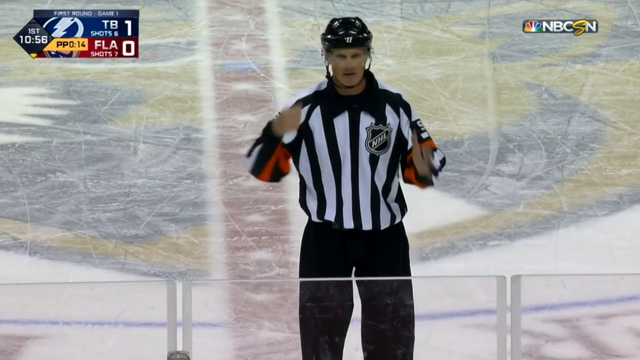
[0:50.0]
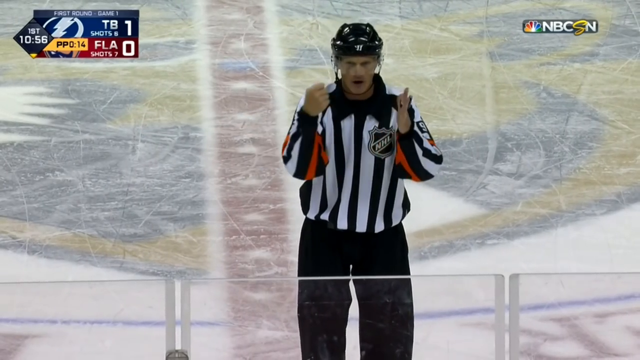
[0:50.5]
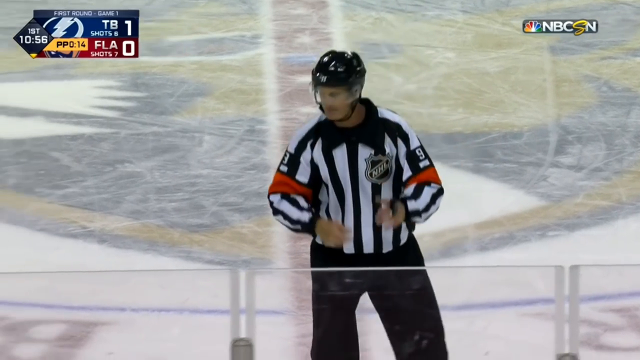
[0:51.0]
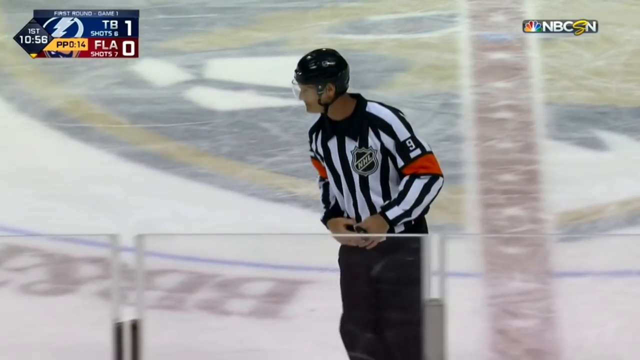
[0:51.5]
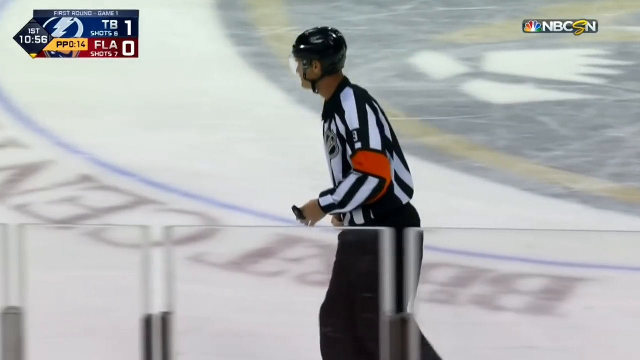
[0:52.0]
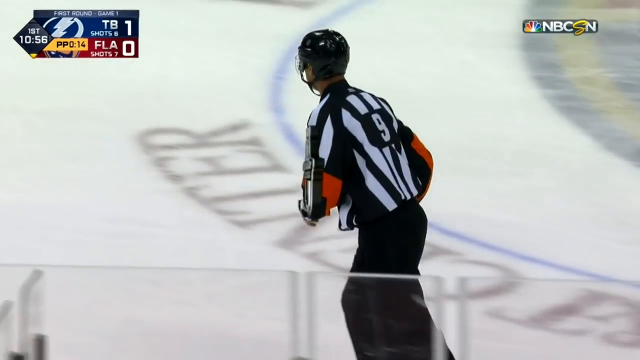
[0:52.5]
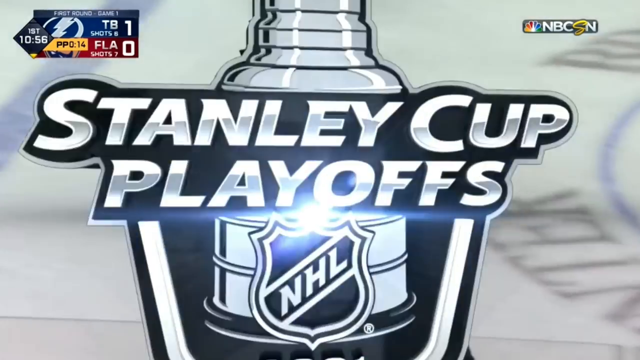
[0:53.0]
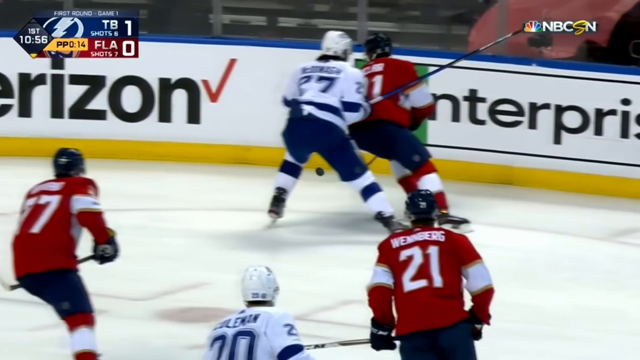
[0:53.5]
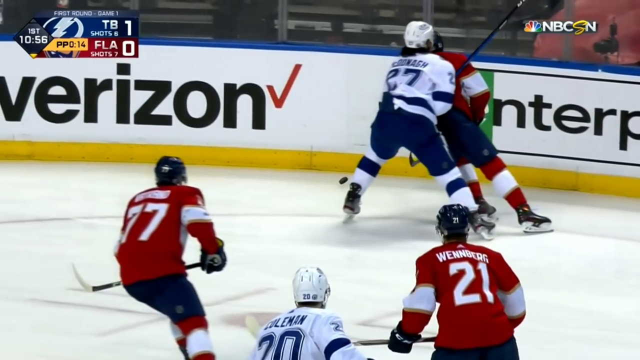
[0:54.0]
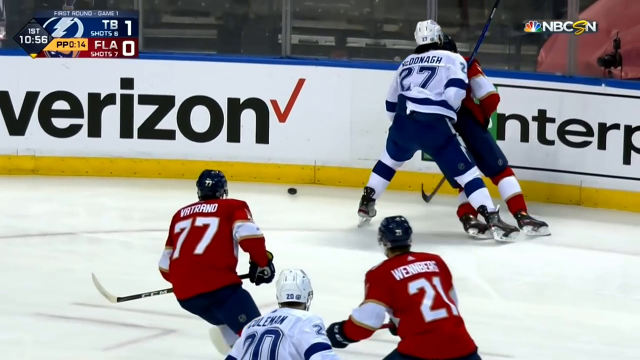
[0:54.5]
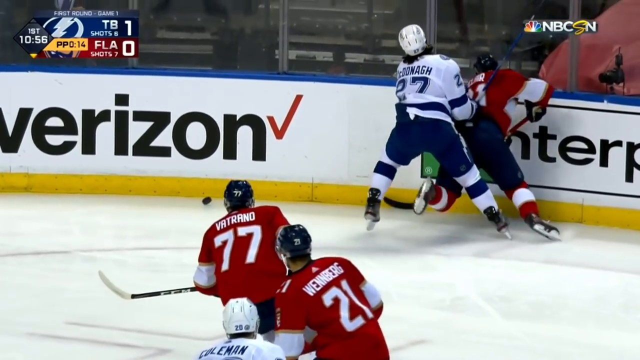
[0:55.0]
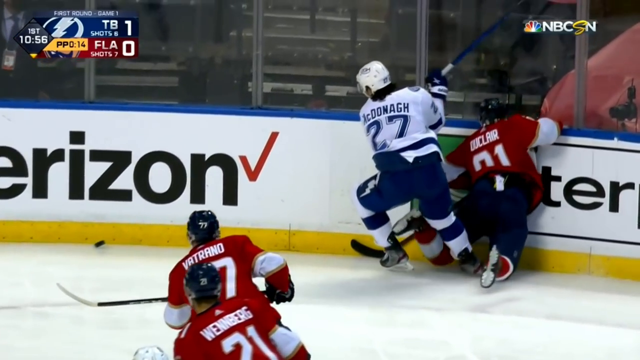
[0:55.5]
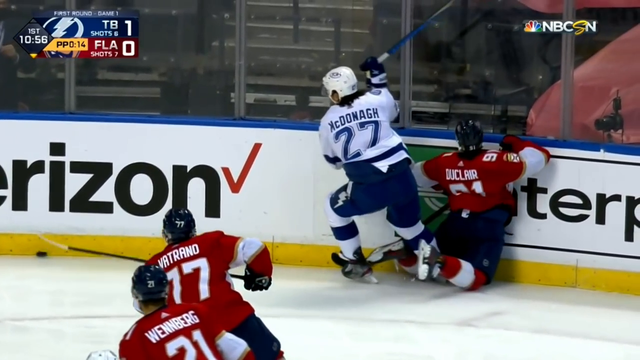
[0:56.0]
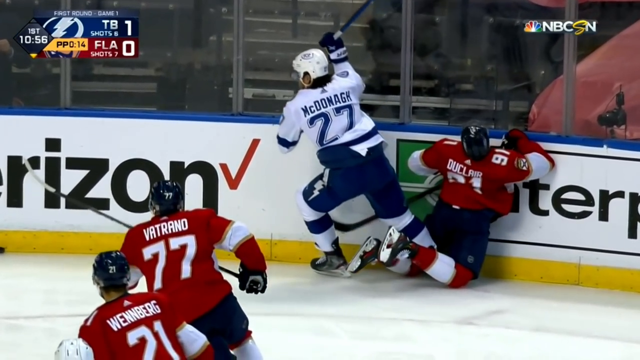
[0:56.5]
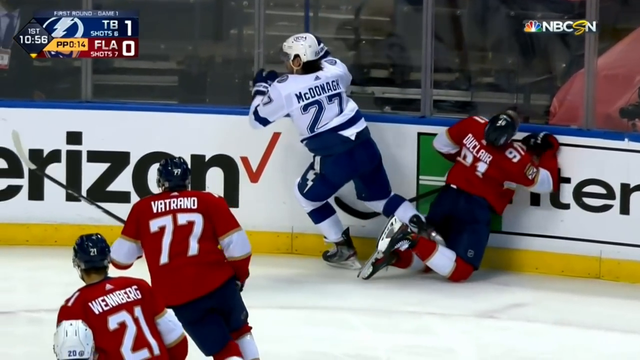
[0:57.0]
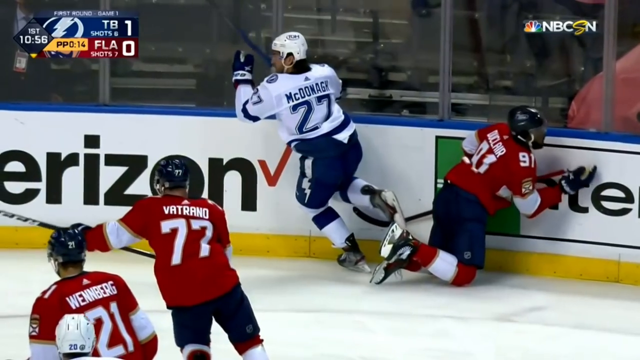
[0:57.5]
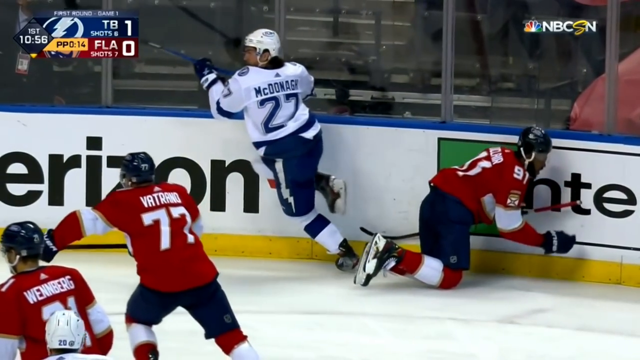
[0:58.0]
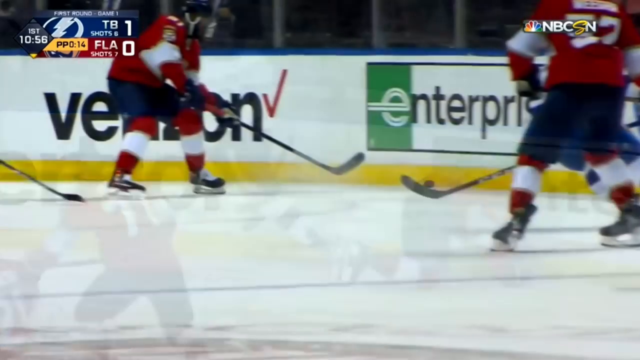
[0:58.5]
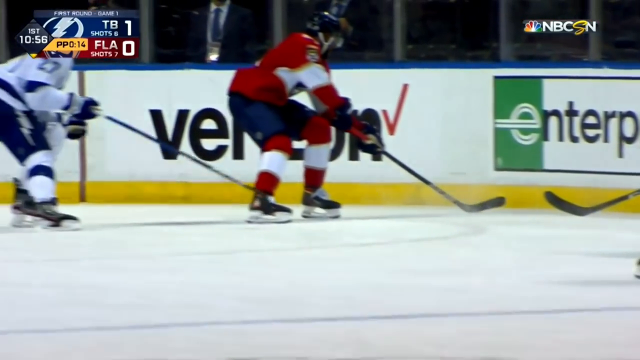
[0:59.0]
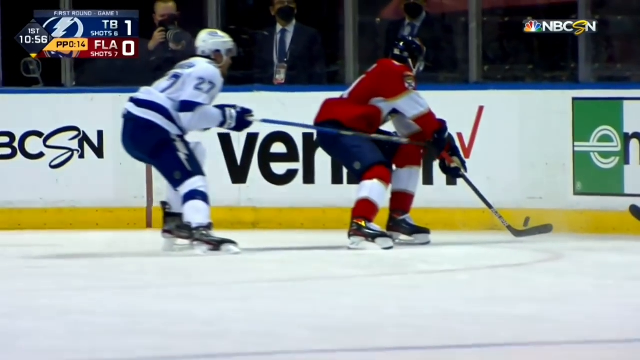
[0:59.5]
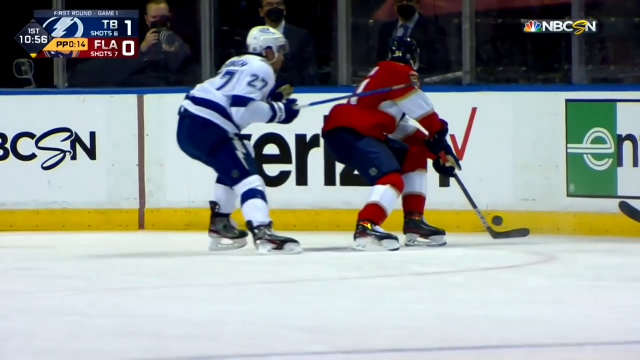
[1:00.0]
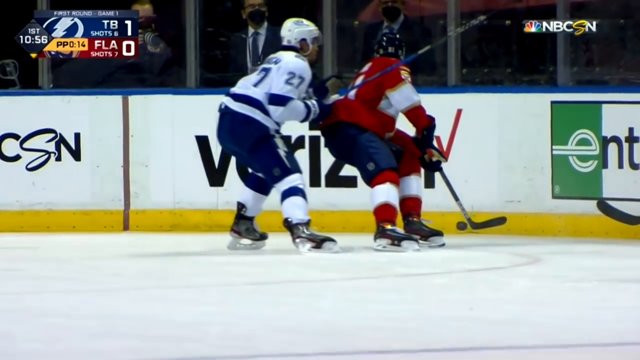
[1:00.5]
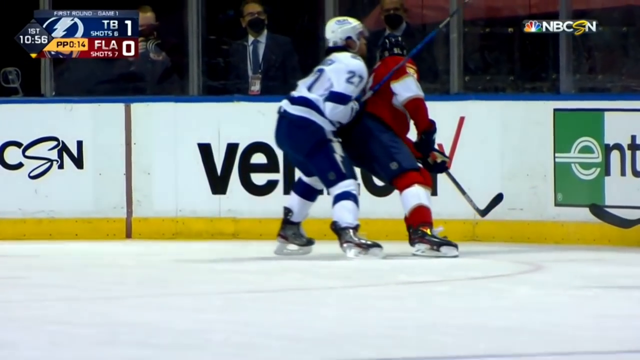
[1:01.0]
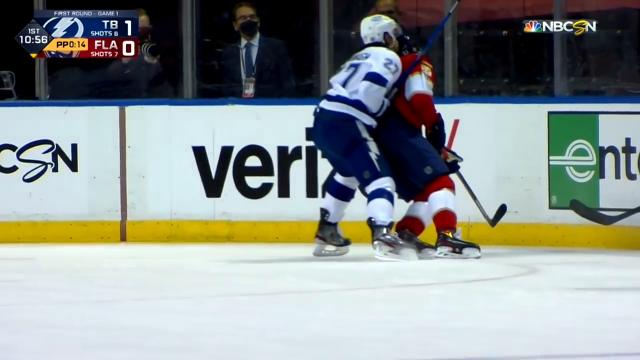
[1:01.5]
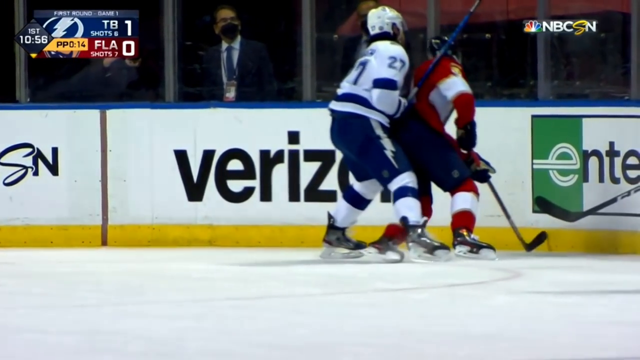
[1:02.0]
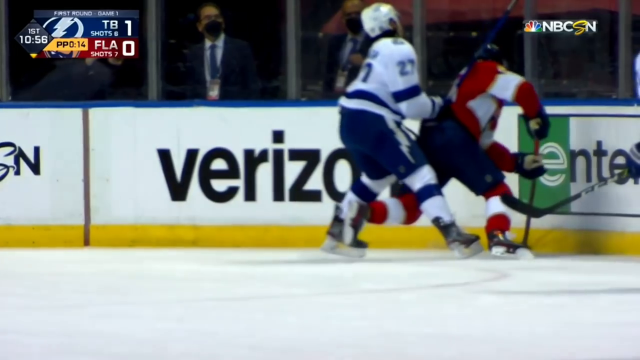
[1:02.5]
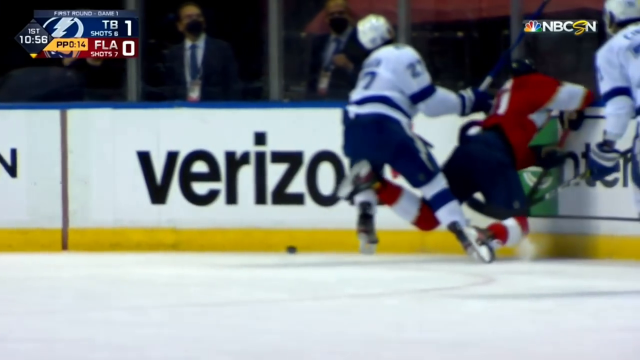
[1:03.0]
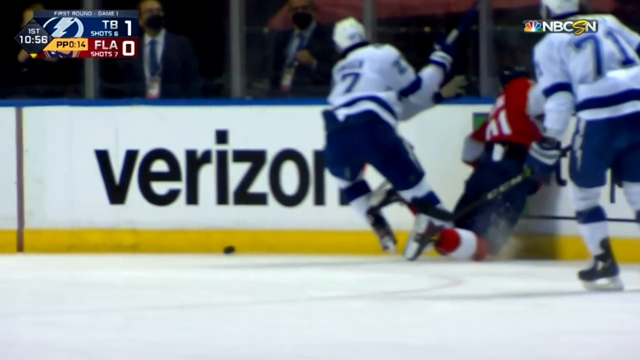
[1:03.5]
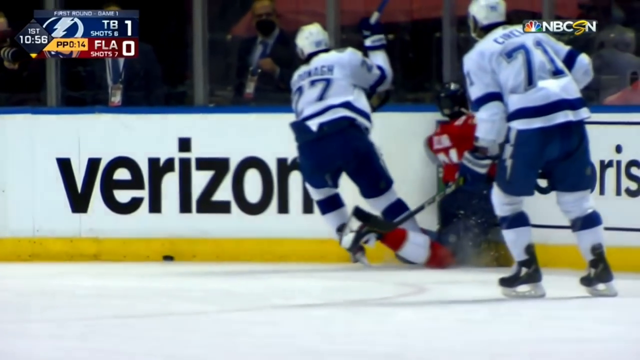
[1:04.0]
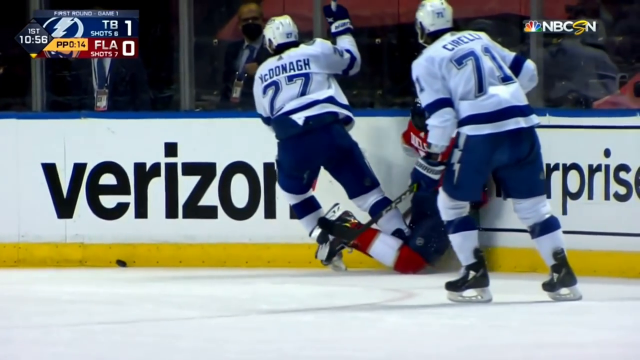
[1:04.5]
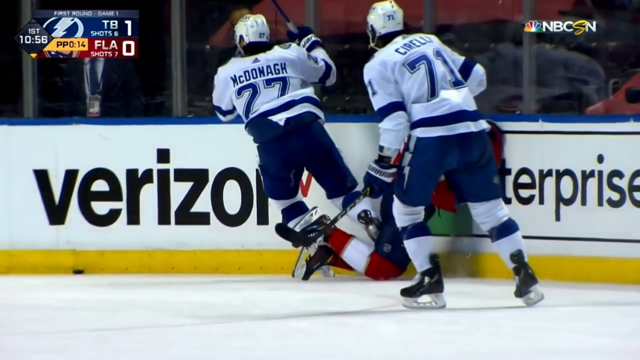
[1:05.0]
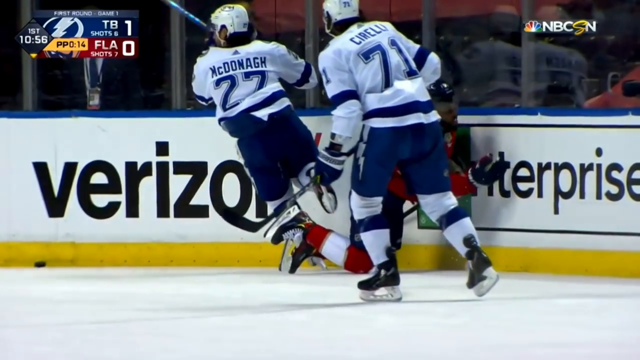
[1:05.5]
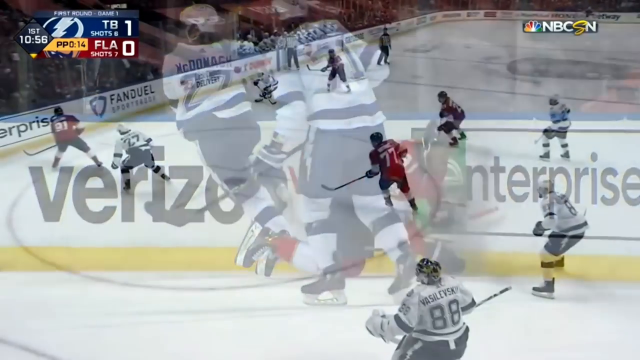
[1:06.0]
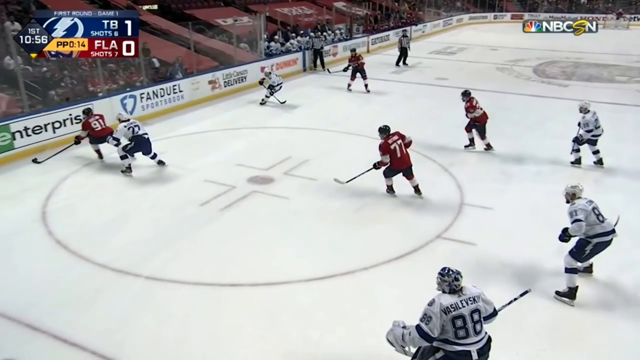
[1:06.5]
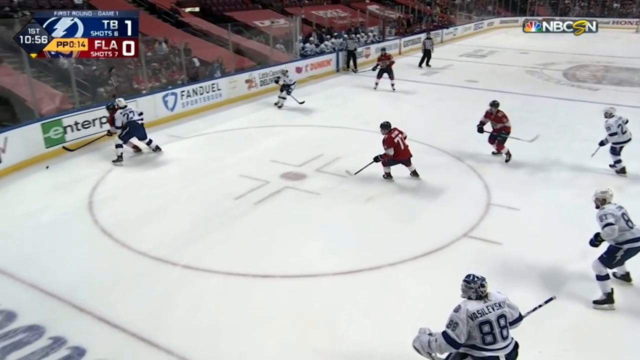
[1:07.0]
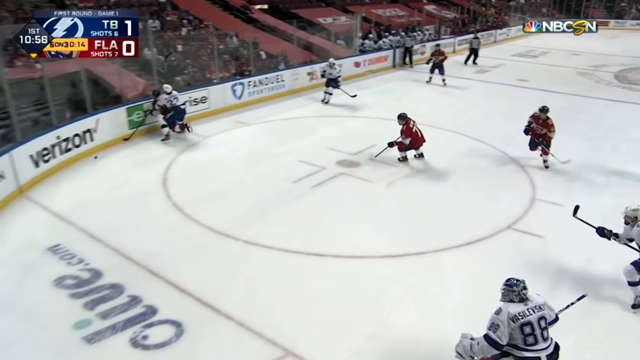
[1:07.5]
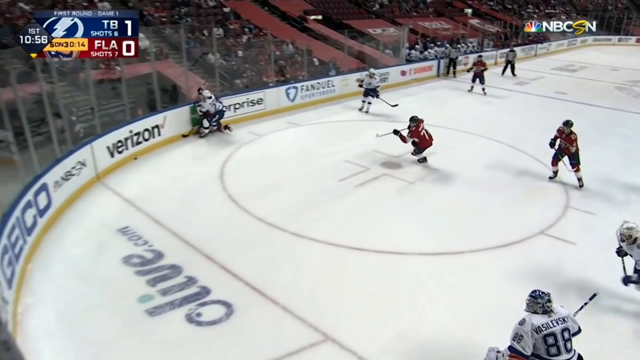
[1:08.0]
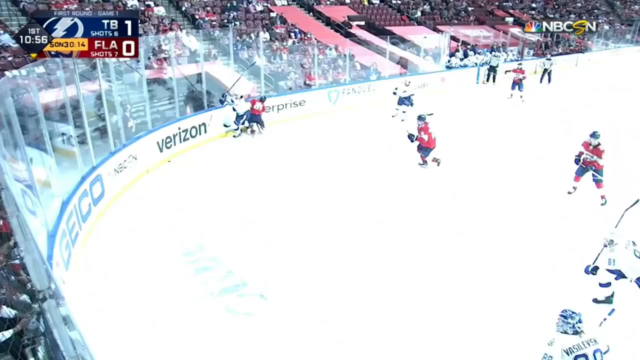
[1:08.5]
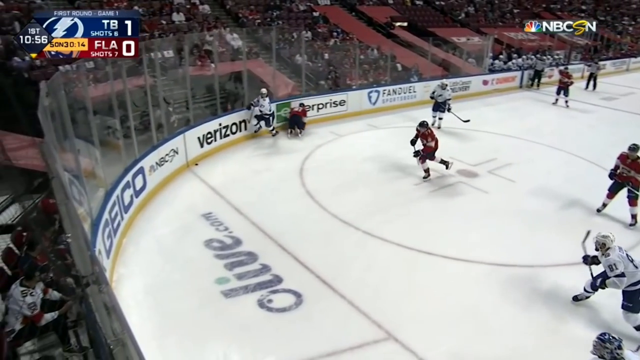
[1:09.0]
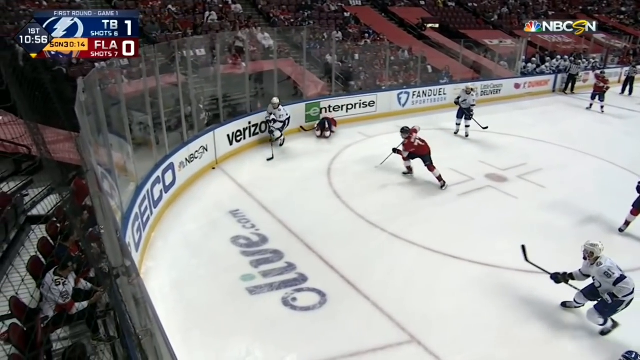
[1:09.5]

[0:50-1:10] A quick shot shows the referee making some sort of call; he looks like he is putting his fist into his hand, maybe to signal a fight. A replay then shows the scene before the fight. A large animation pops up reading "Stanley Cup Playoffs" as the image zooms toward the camera. A very large logo under the ice says something with the word "center," which can barely be made out. The replay shows player number 27 seeming to bash into a Florida player, apparently number 91, who smashes into the wall into the Enterprise logo.